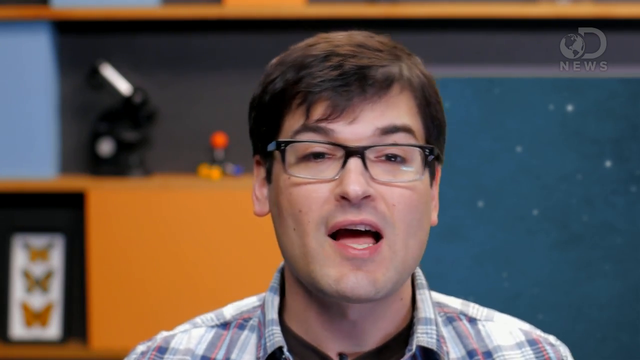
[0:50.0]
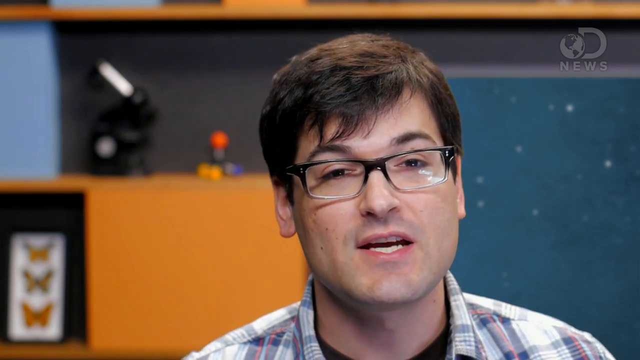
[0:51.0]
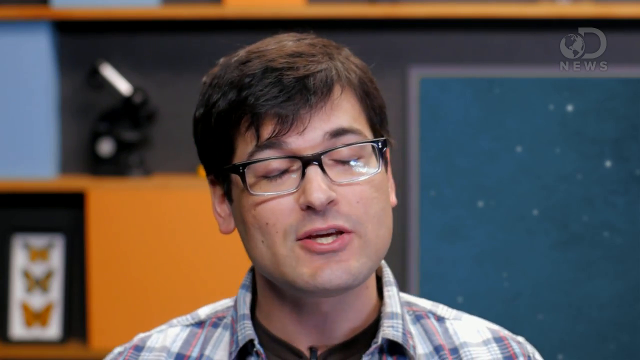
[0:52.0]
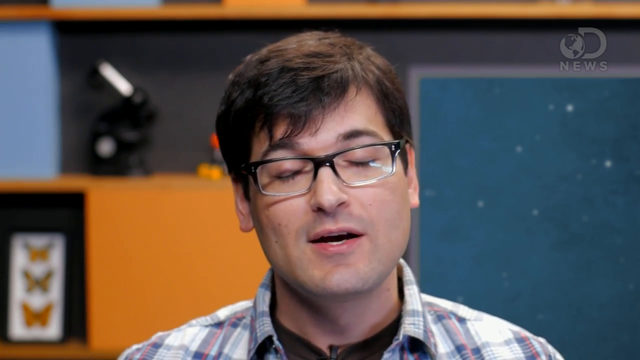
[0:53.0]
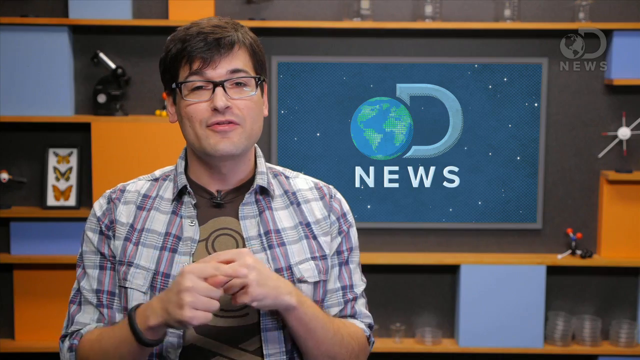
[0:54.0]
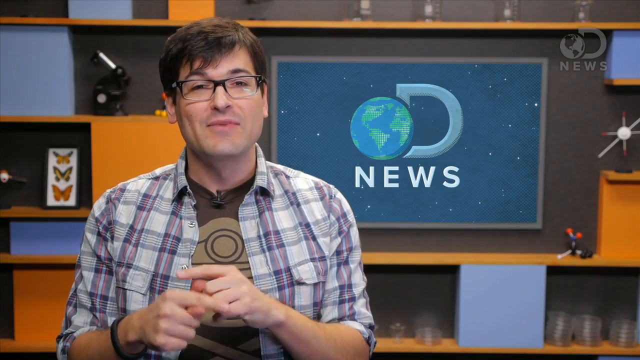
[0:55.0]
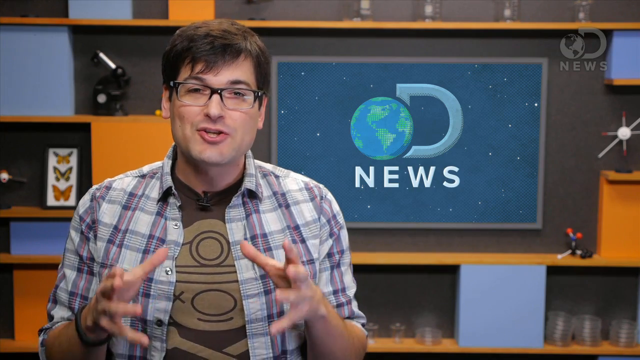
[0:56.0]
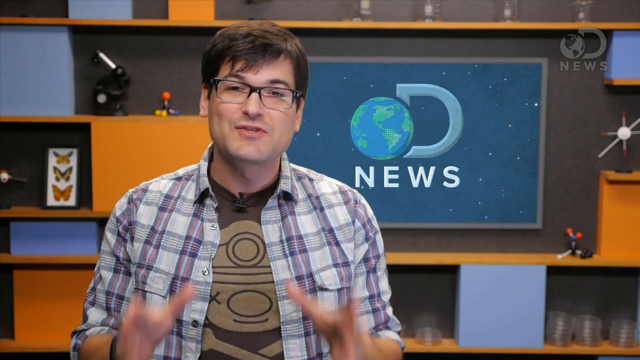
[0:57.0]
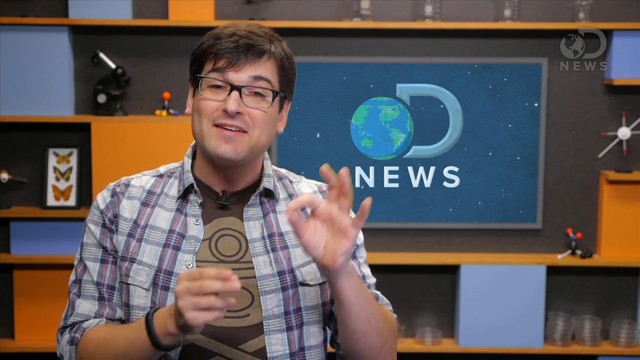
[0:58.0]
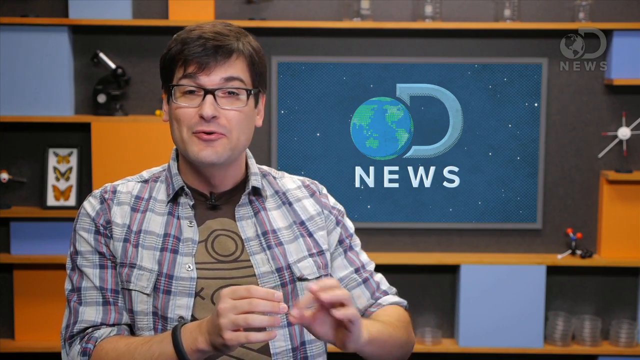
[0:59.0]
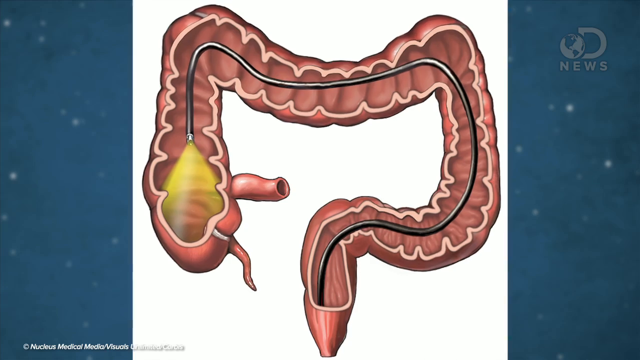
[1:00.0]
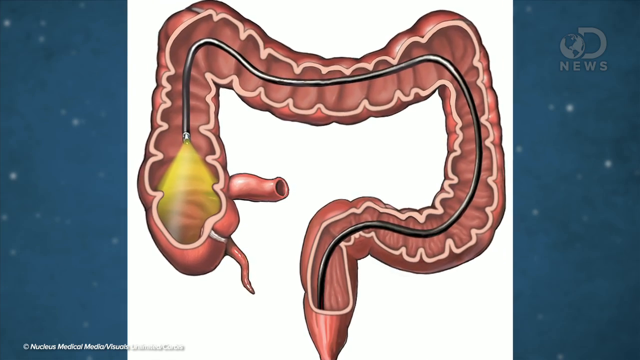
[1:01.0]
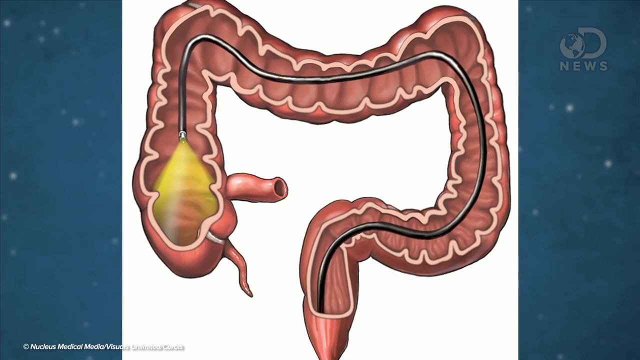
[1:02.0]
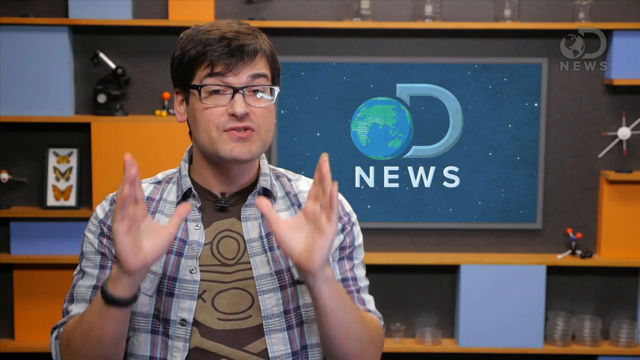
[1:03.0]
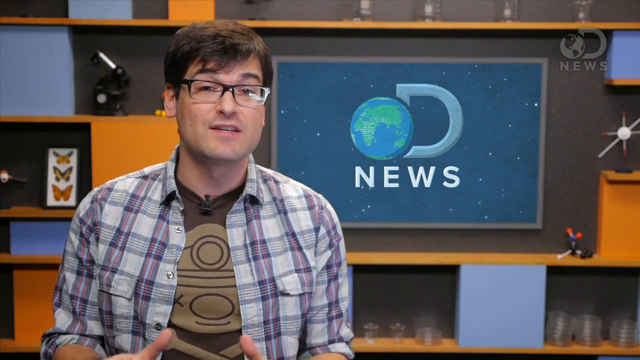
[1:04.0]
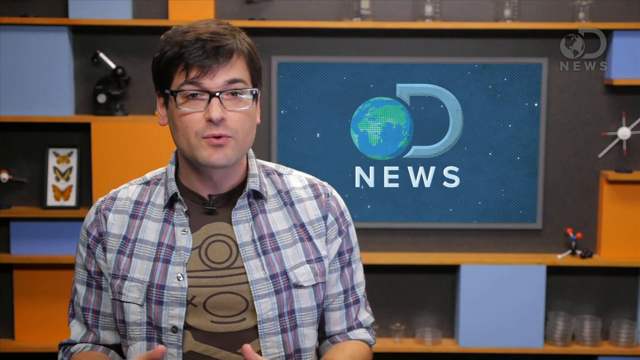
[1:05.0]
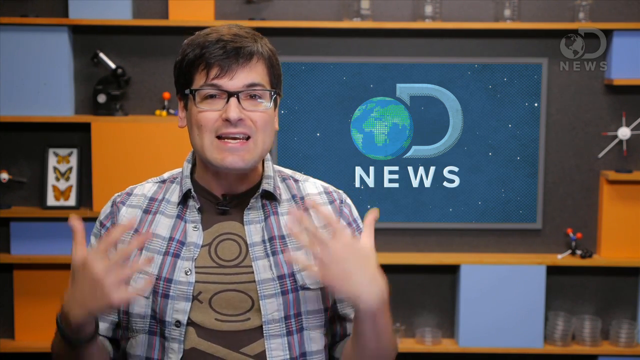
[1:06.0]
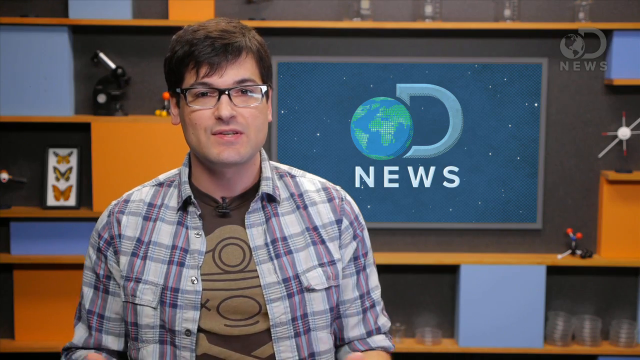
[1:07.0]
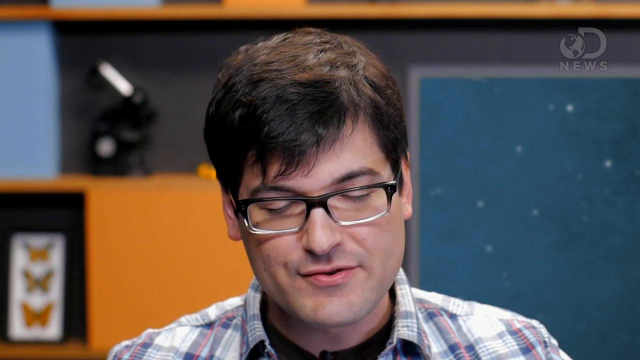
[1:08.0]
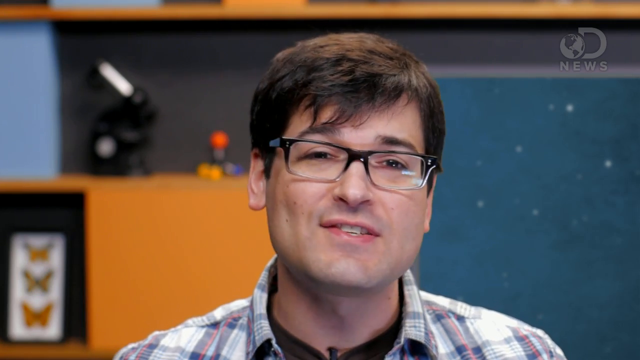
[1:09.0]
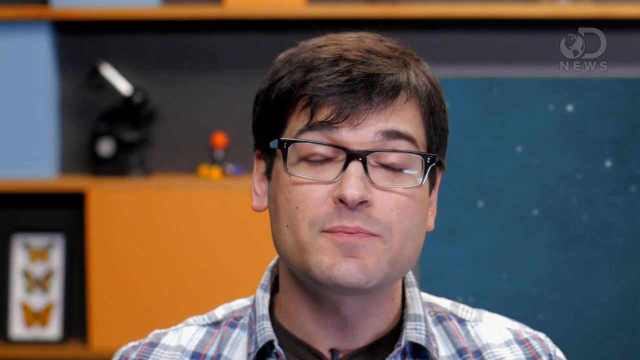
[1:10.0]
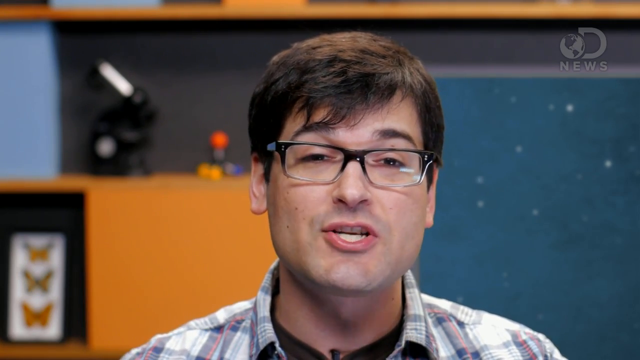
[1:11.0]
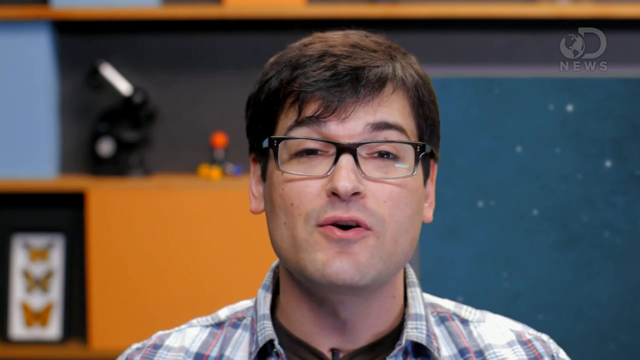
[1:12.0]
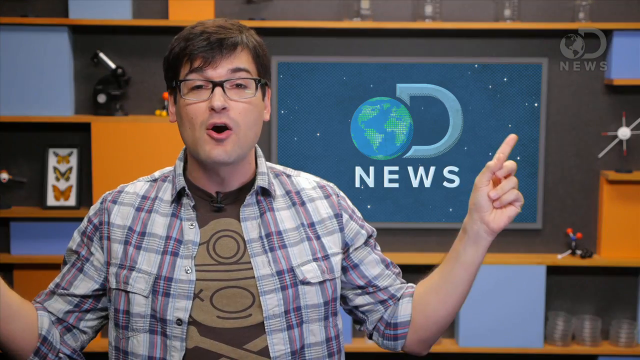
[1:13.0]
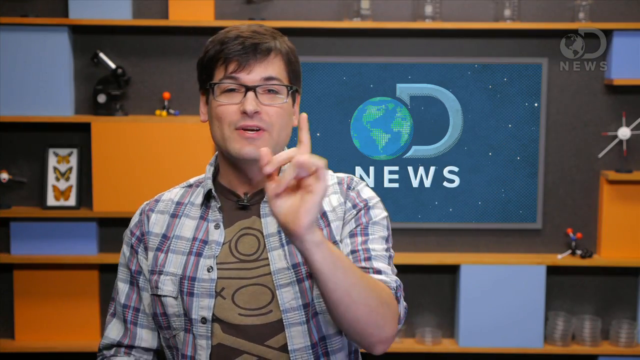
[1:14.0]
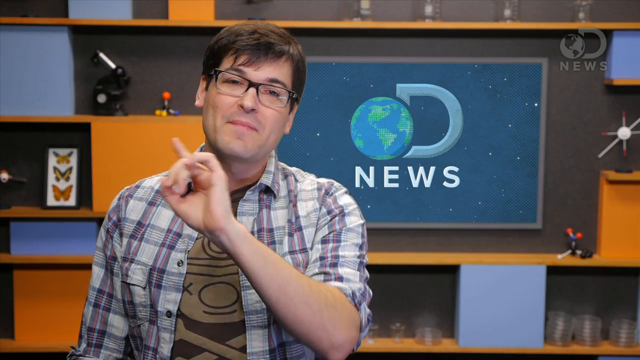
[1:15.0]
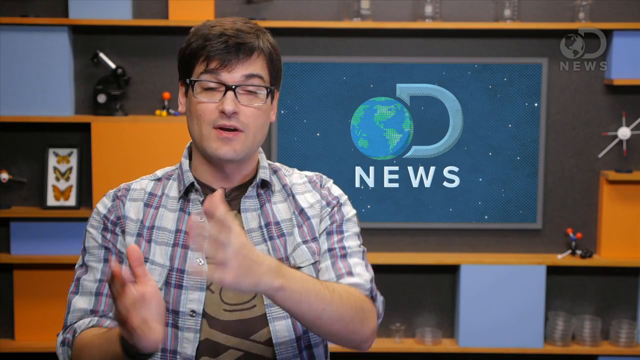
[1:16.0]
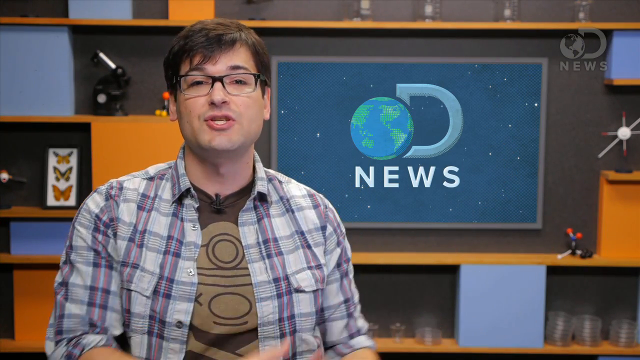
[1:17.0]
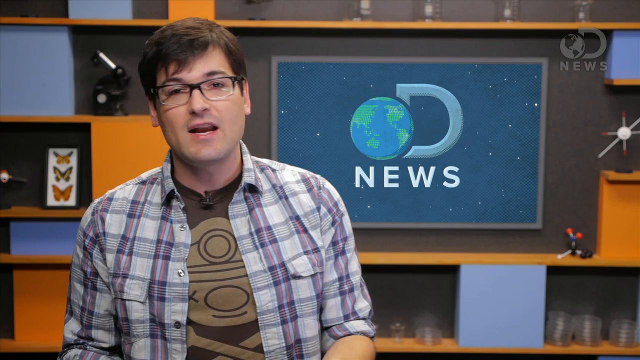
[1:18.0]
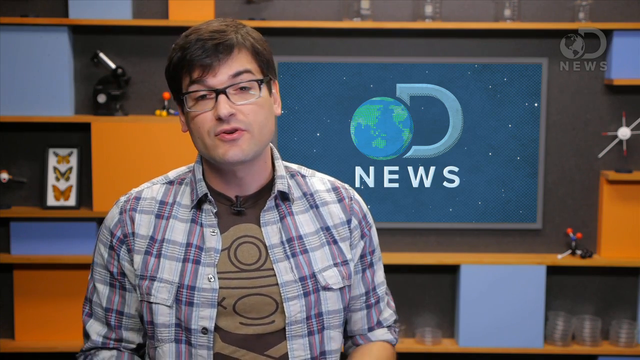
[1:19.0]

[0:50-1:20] Anthony Carboni is talking. His eyes are open at first, then he closes them while talking and opens them back up. He points the pointer fingers of both hands and brings them one over the other in front of his chest as he speaks. He then spreads his fingers and moves his hands up and down to emphasize something, moves his hands to his left, and holds one in a partial circle, moving it up and down. A graphic follows of what looks like intestines with what looks like some kind of light in them, an instrument shining a yellow beam, probably for a surgery. Back on Anthony Carboni, he puts his hands near his head again as he speaks, then holds his palms upward and out in front of him. He puts his head down and closes his eyes for a split second, then raises his head and opens his eyes. He holds both arms out to his sides, about parallel with his shoulders, with pointer fingers pointing in opposite directions. He then brings his left hand in front of him with the pointer finger out and points to the TV, swings it to his right, and then back to his left.